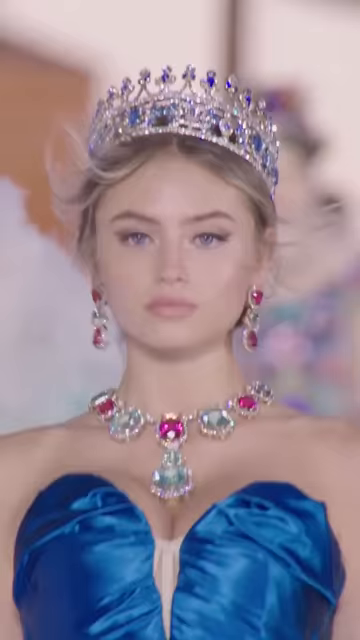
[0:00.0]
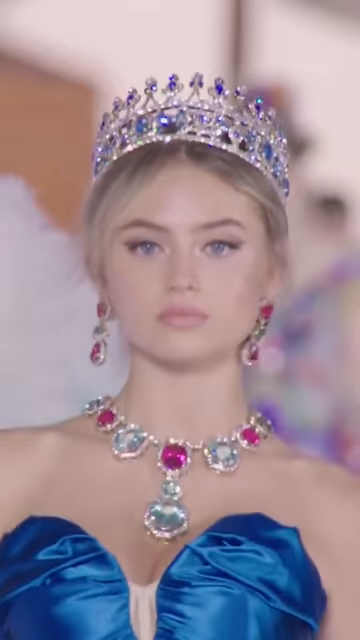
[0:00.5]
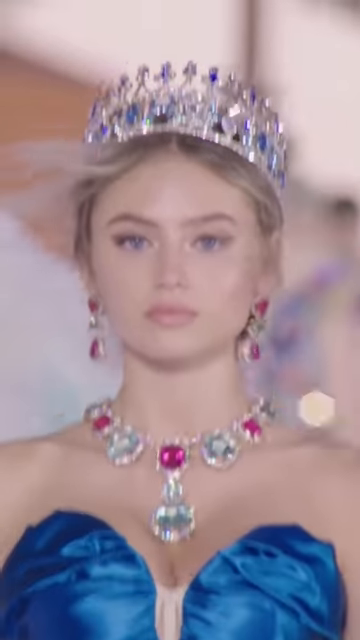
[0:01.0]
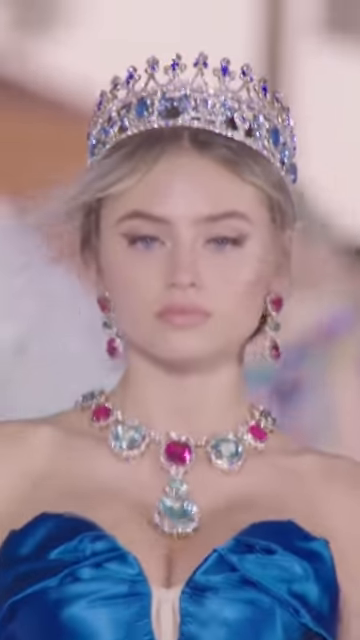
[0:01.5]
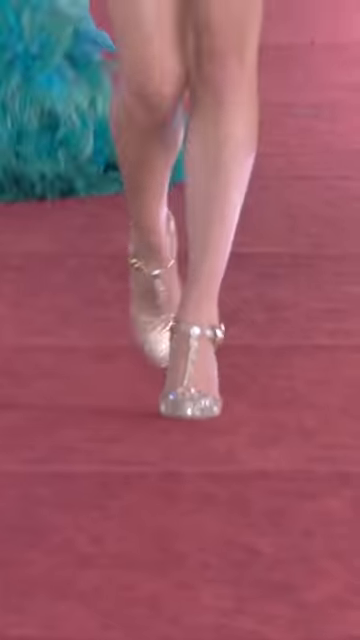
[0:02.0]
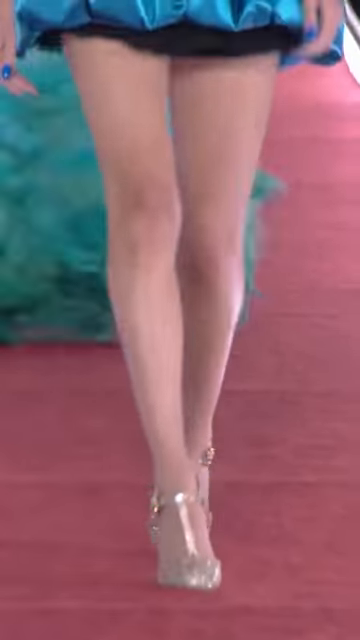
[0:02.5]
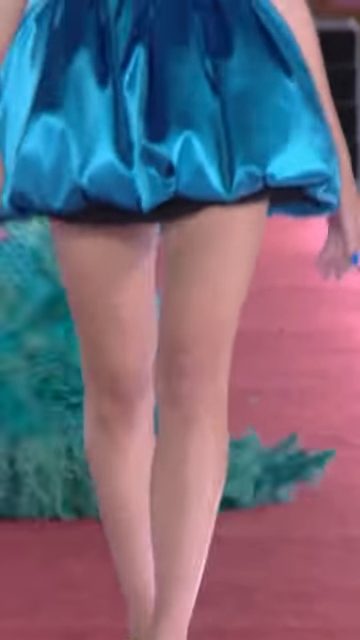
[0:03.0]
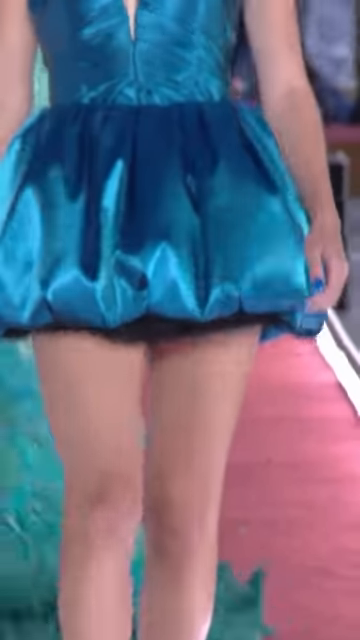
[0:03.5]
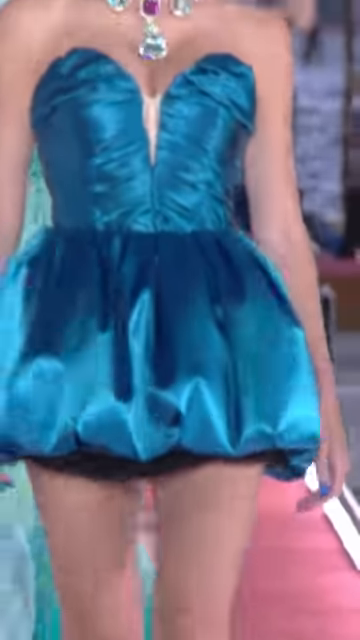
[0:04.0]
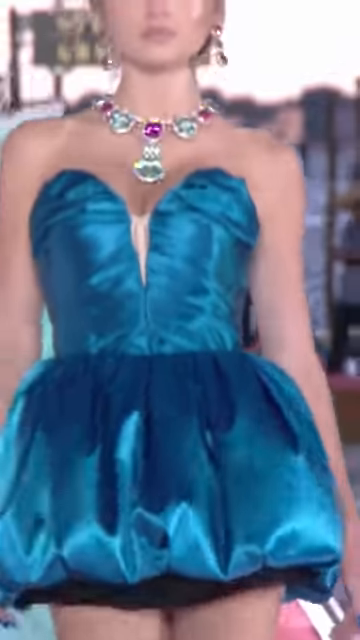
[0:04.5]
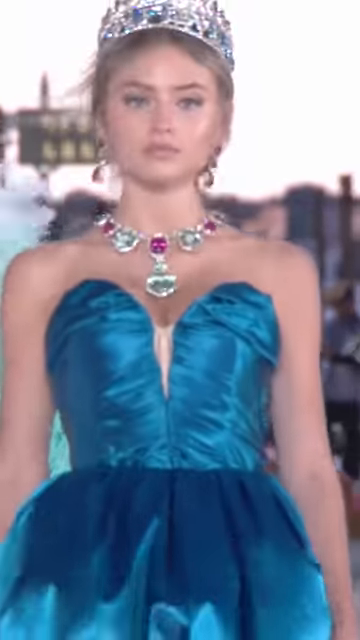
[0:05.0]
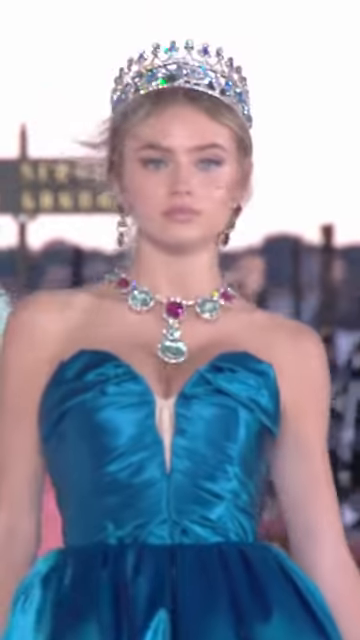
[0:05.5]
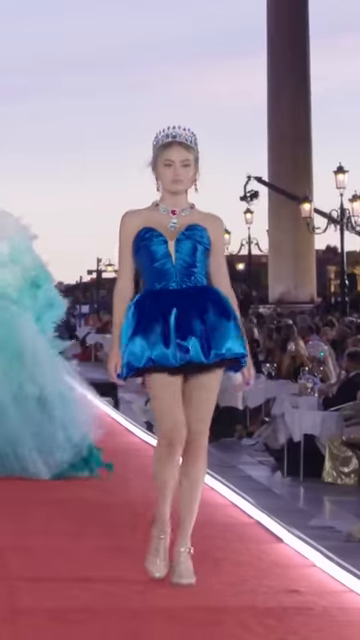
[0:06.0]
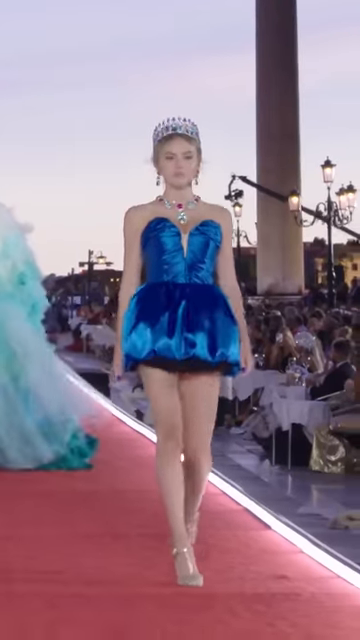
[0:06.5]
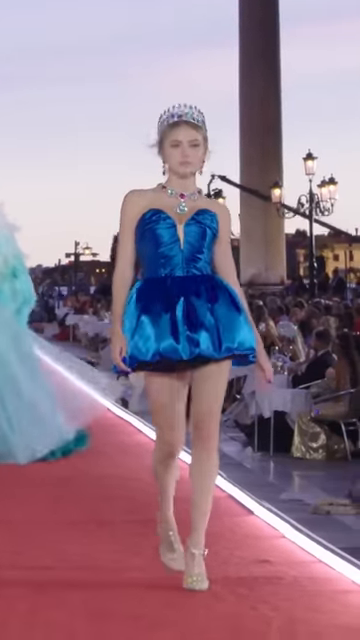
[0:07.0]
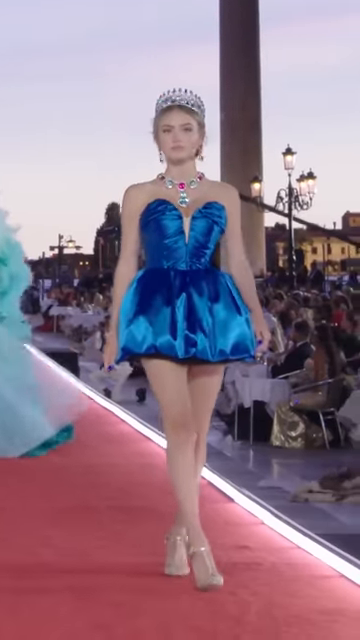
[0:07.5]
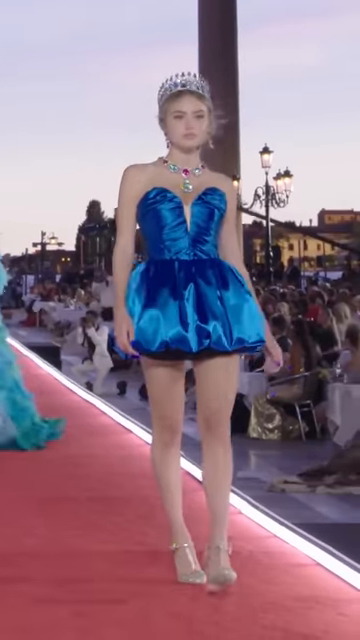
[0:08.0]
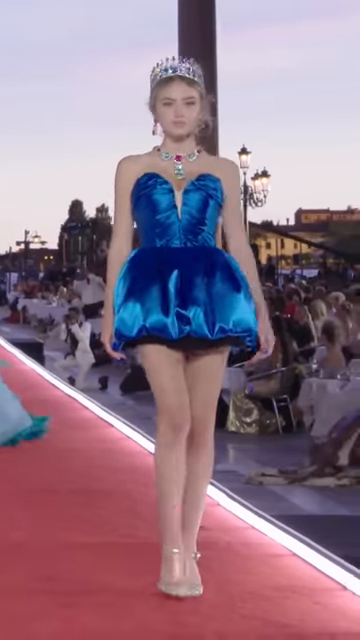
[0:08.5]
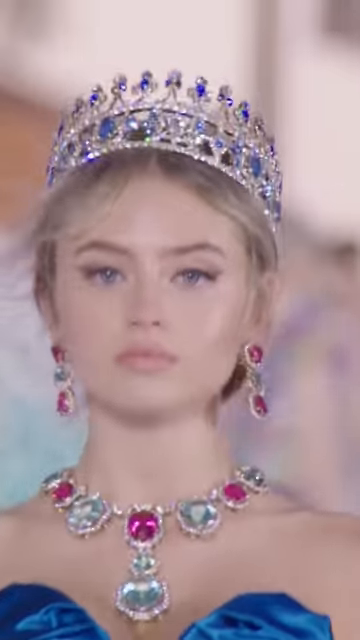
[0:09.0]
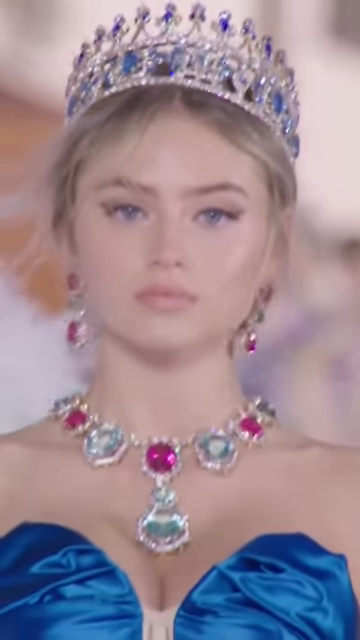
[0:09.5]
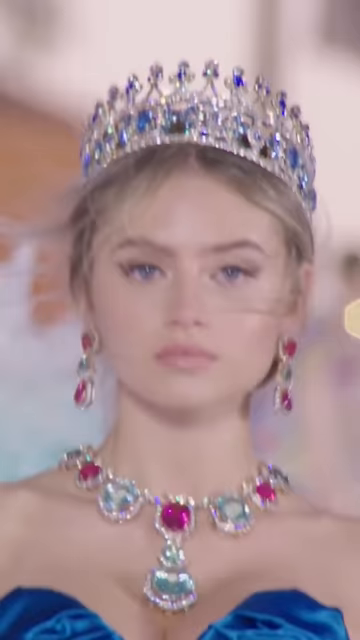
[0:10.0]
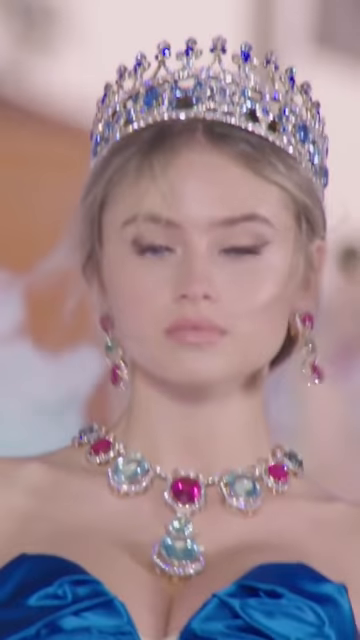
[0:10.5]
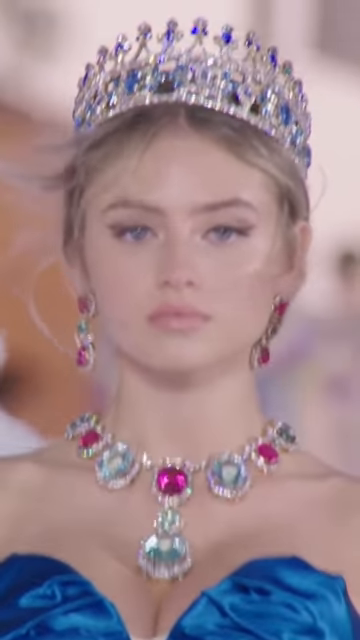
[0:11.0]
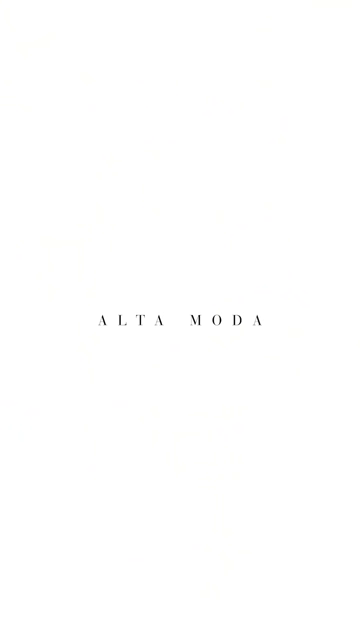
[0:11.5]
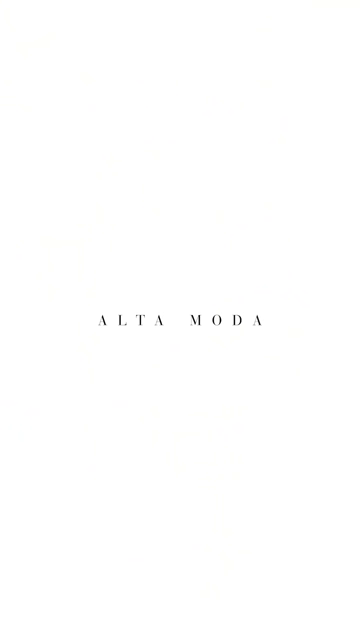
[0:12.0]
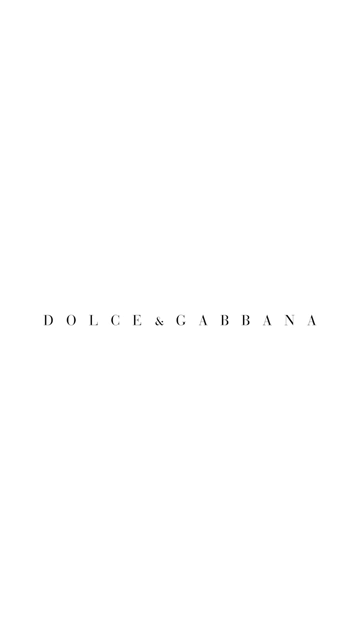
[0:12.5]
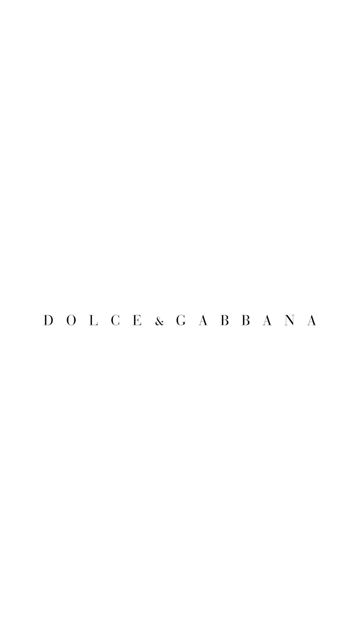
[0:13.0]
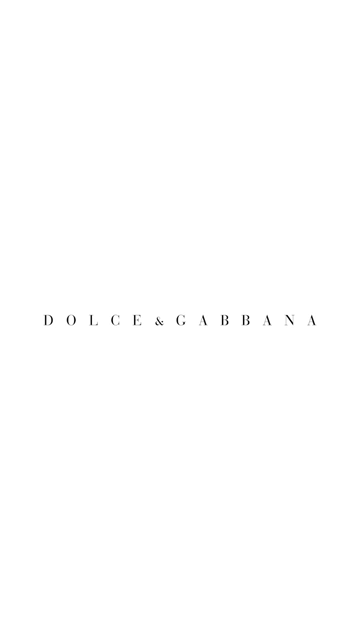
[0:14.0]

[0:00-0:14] A model walks down a runway. She wears a large, sparkly crown with some blue gems on top, and a necklace with big jewels of a green ruby color across her. Her dress is a sort of aqua green and very short, almost like a mini skirt, and she appears to be wearing gold high heel shoes. Her hair is a blondish brownish color. People are on the side of the runway, and people at tables are visible in the background. There are lamps, and gold and lights outside. Someone walks behind her. The view starts with a close-up of her face, goes to her legs, and then roughly back up to her face. There is a close-up of her face, and text reads "Altamada Dolce & Gabbana", so this is apparently a Dolce & Gabbana runway show. It looks a little windy: her hair seems to blow in the wind and across her face, and the dress of the person behind her appears to be blowing as well.